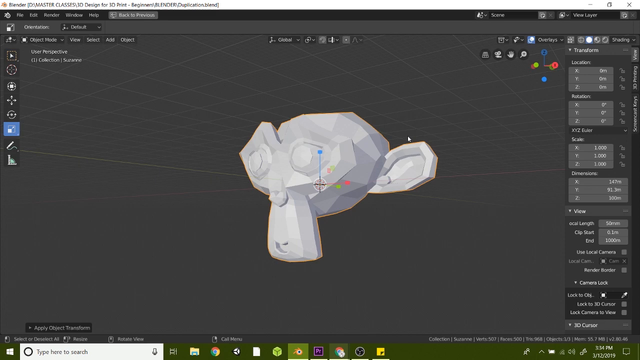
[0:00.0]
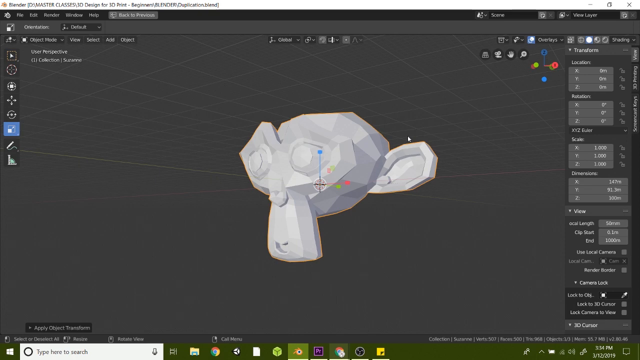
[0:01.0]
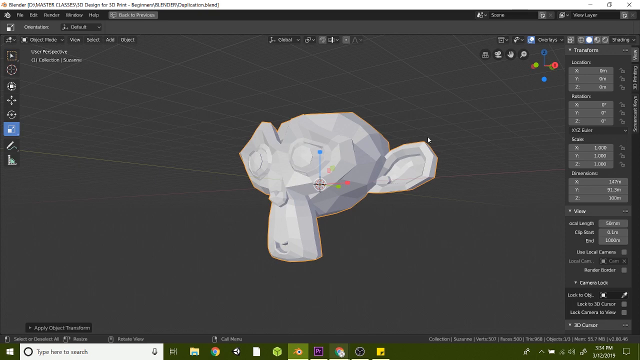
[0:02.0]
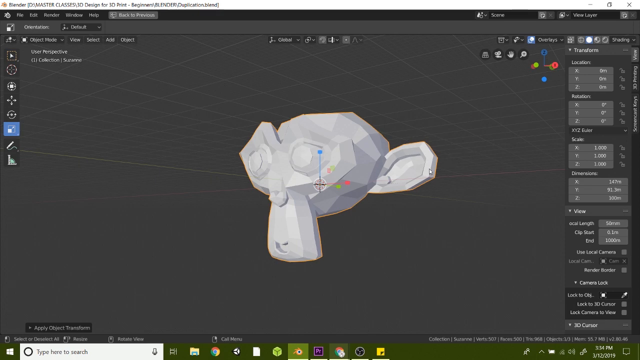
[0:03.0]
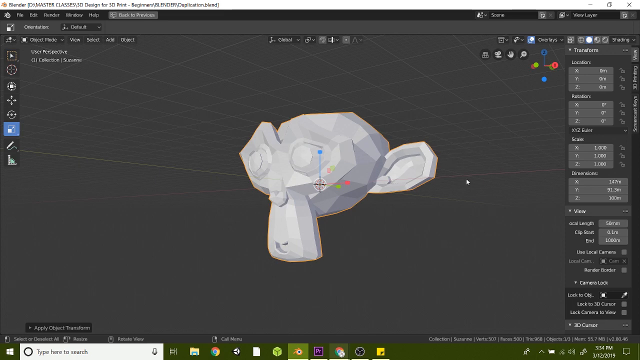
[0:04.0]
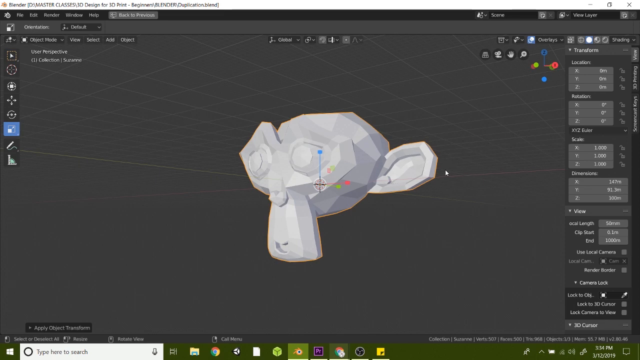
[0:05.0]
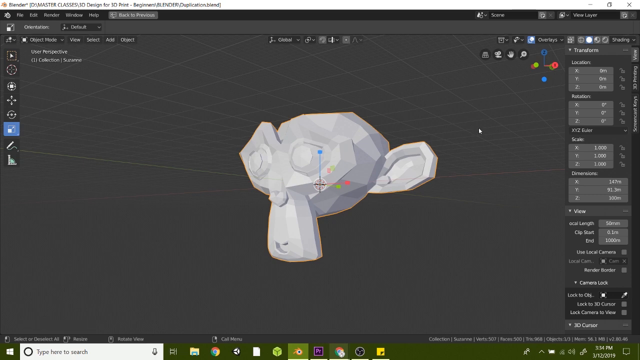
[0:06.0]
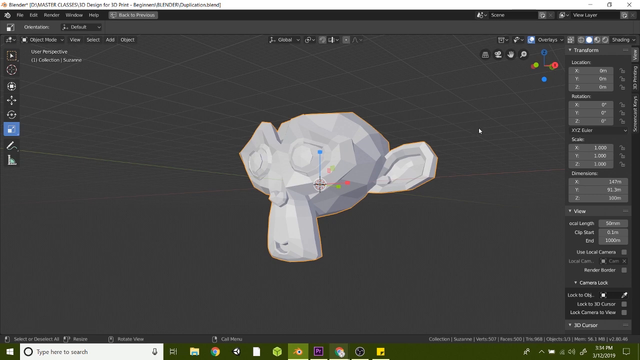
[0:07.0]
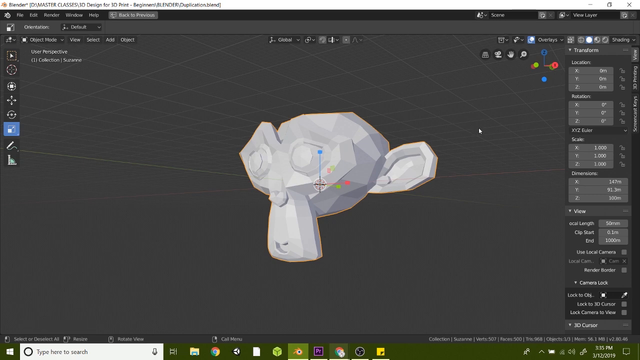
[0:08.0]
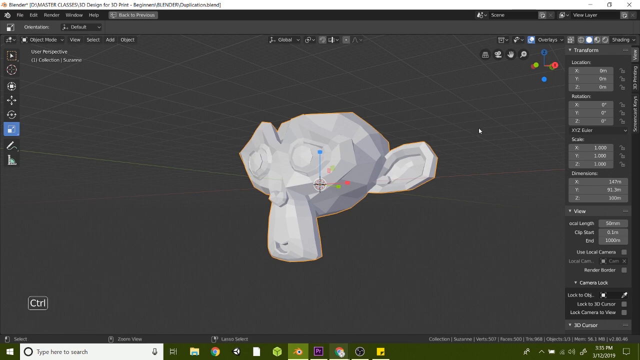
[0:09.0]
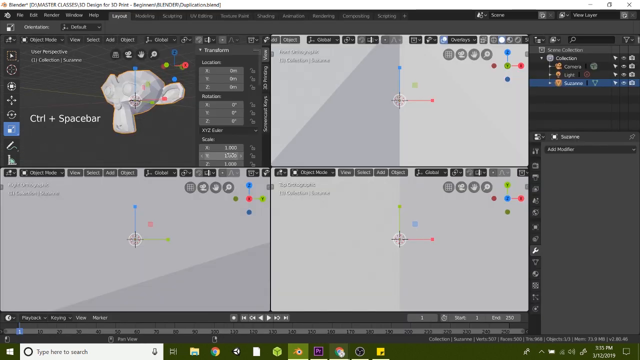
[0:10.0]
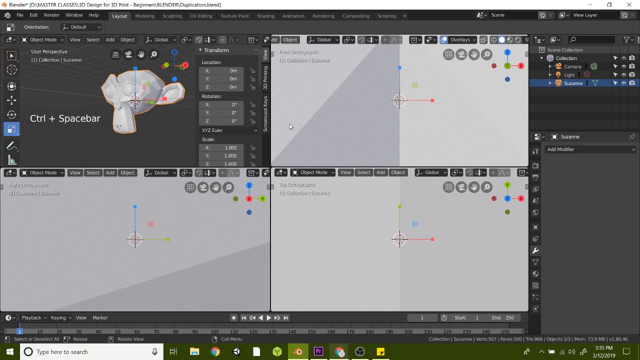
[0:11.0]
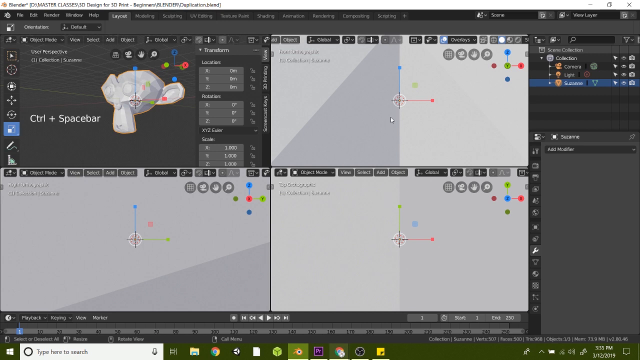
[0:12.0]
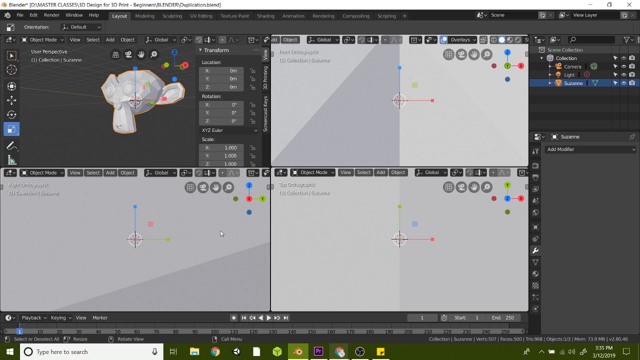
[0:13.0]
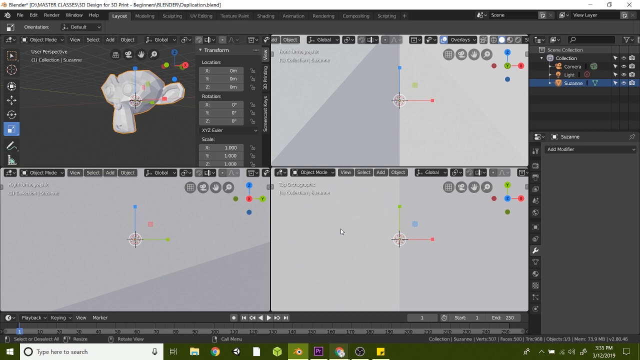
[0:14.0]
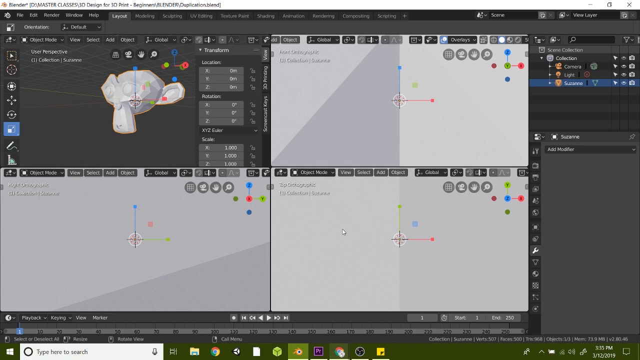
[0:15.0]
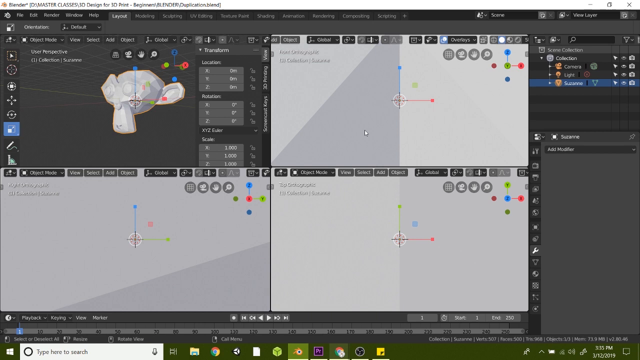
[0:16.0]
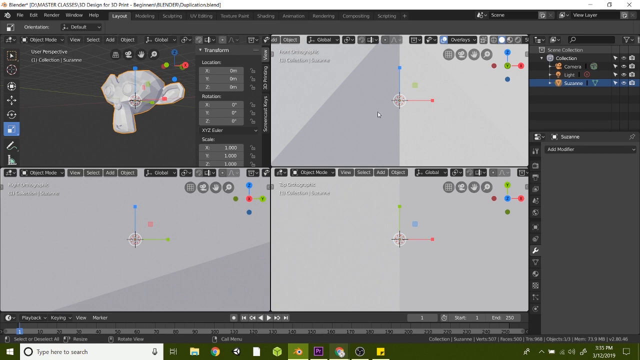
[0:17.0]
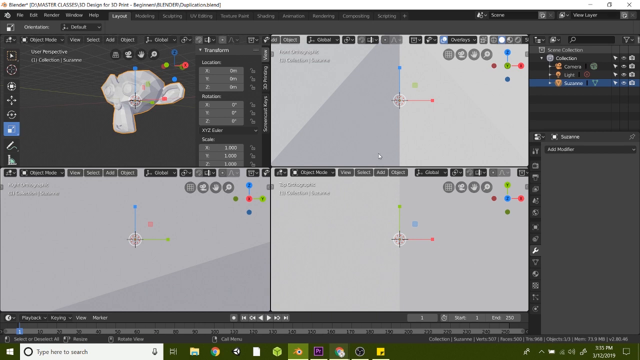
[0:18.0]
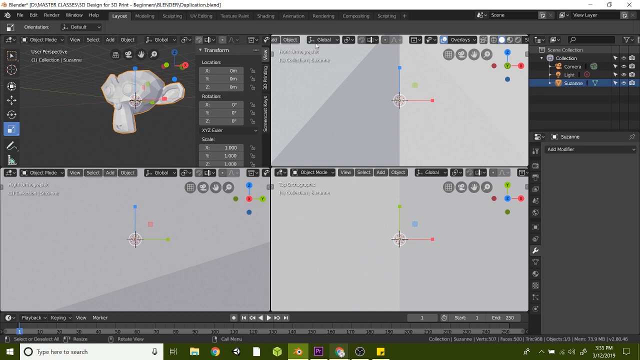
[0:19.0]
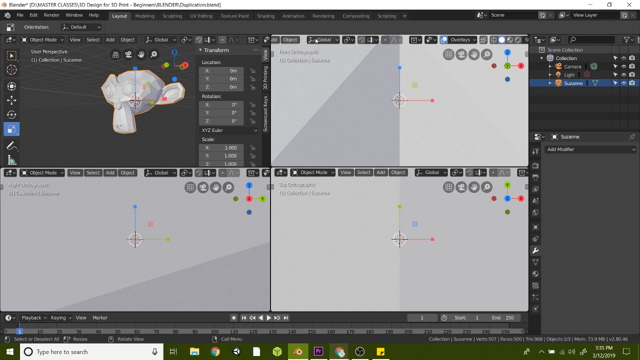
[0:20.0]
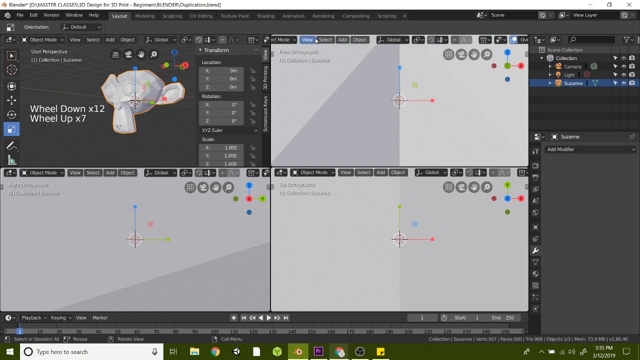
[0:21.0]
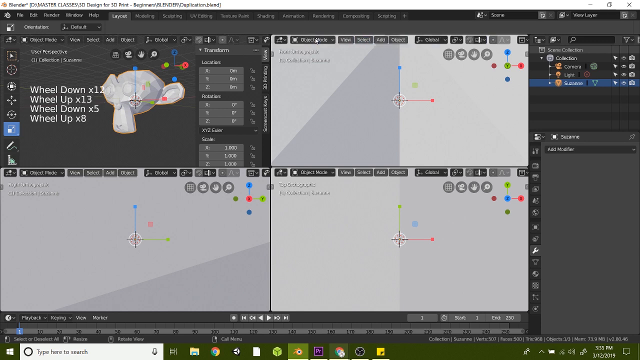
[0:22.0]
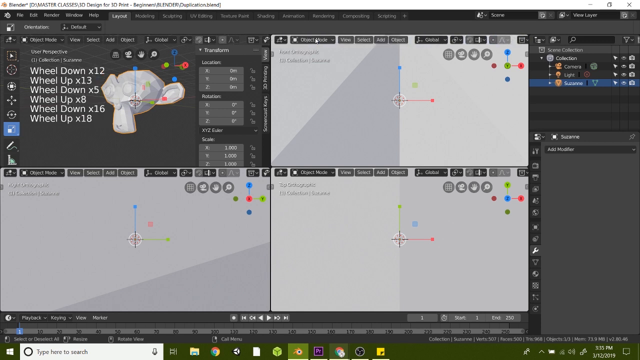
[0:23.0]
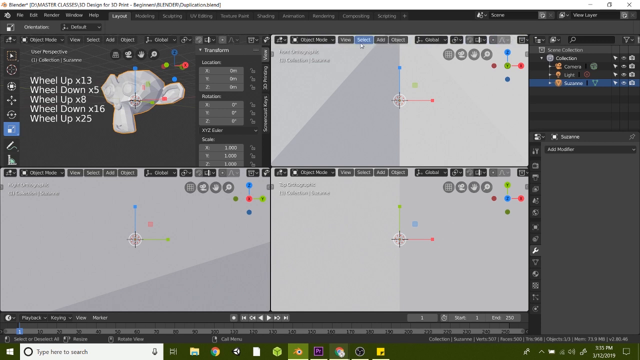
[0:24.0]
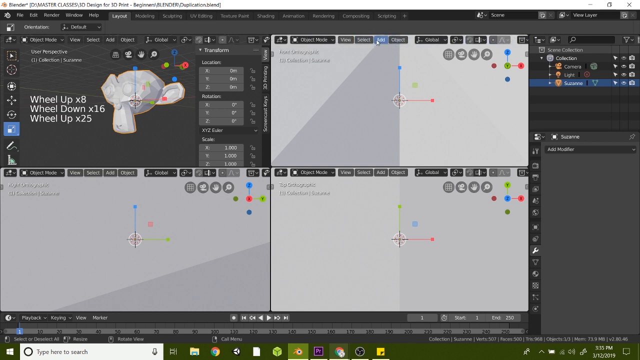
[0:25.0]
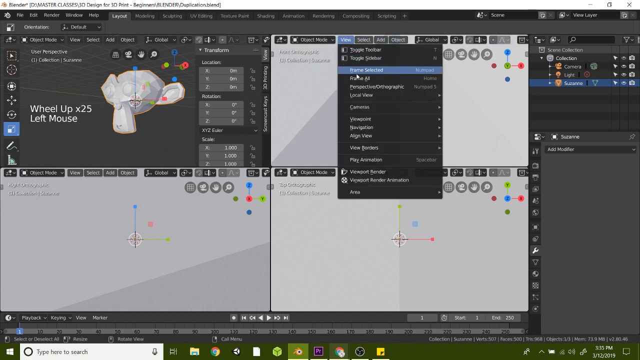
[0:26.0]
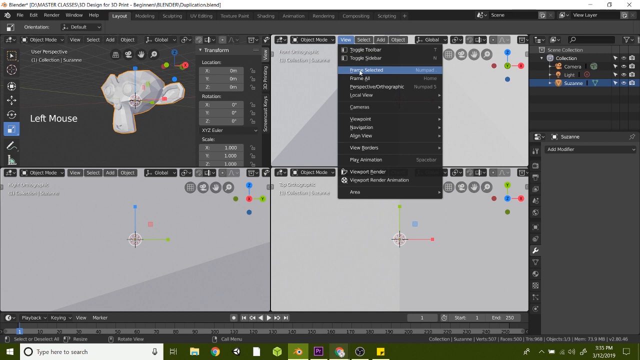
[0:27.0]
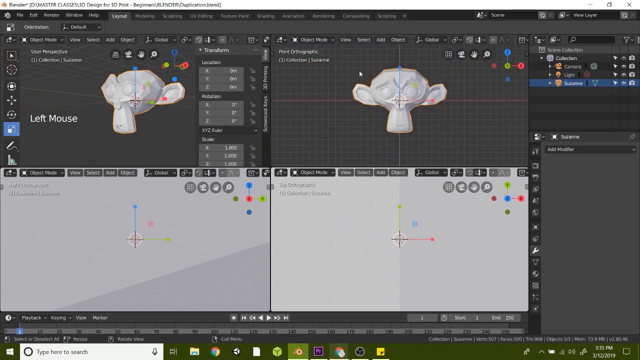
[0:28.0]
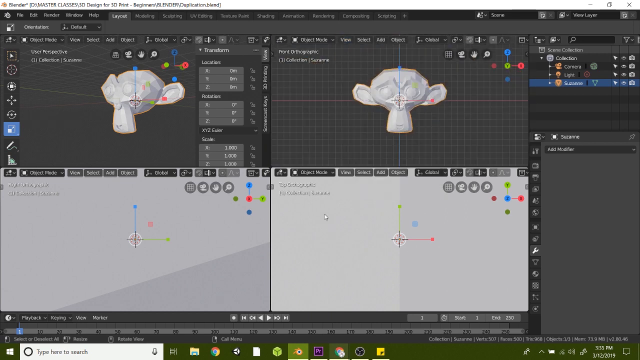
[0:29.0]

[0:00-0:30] A man works in Blender, apparently building his own model. He edits the main settings and details, creating a monkey face. He appears to be teaching people, possibly on YouTube, how to create certain models in Blender.